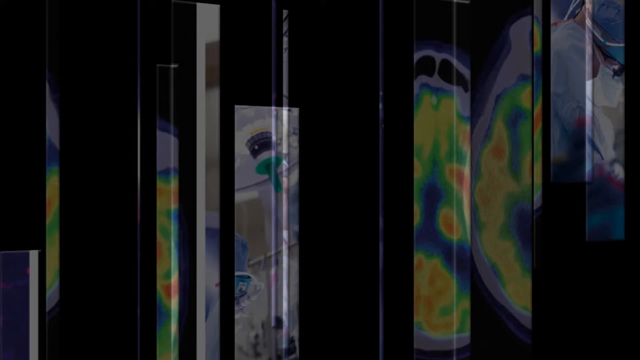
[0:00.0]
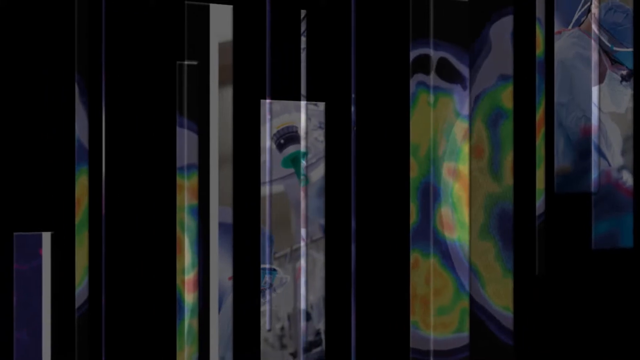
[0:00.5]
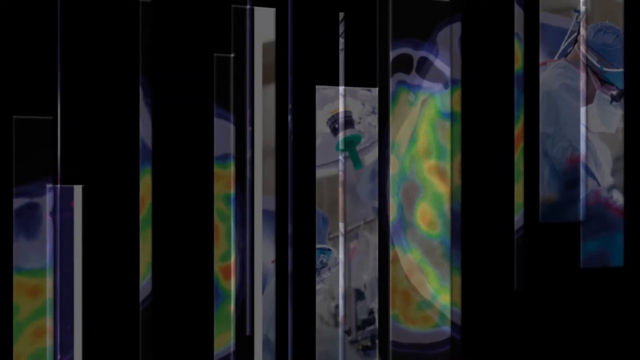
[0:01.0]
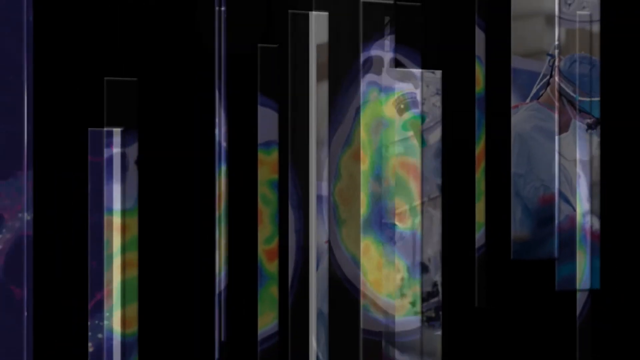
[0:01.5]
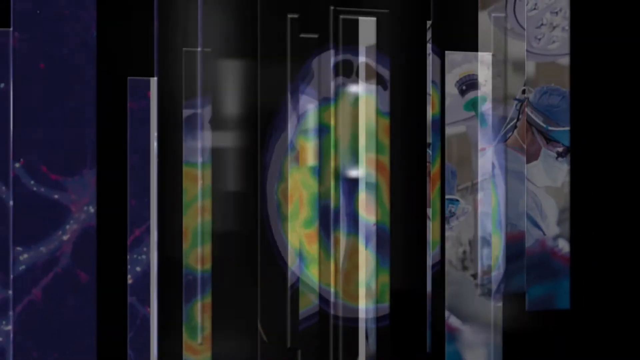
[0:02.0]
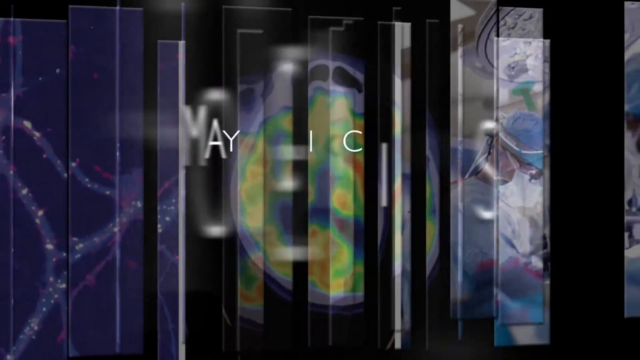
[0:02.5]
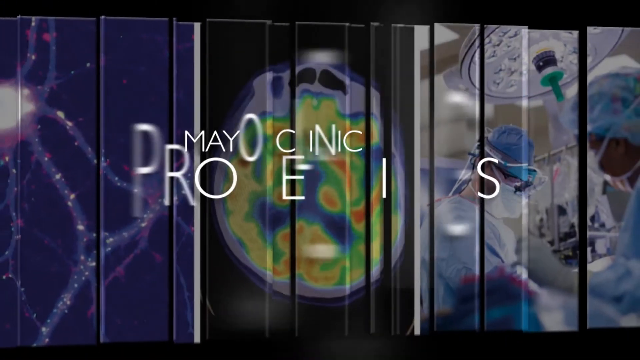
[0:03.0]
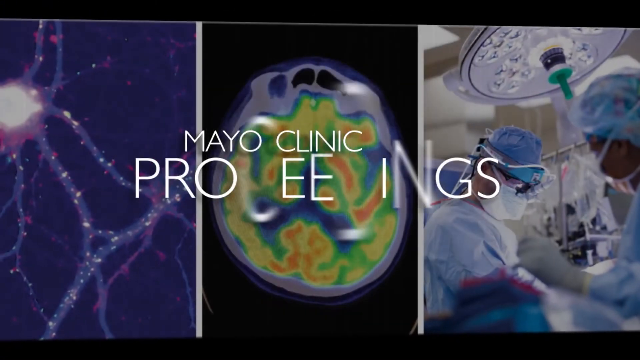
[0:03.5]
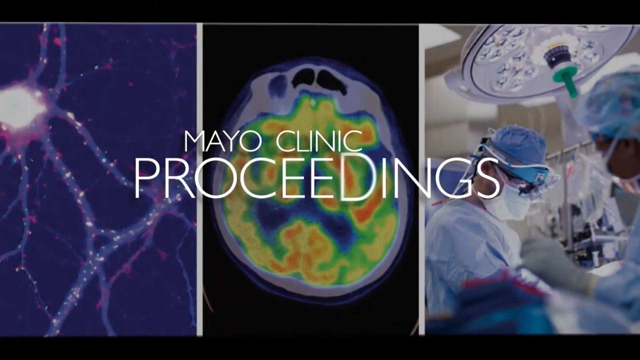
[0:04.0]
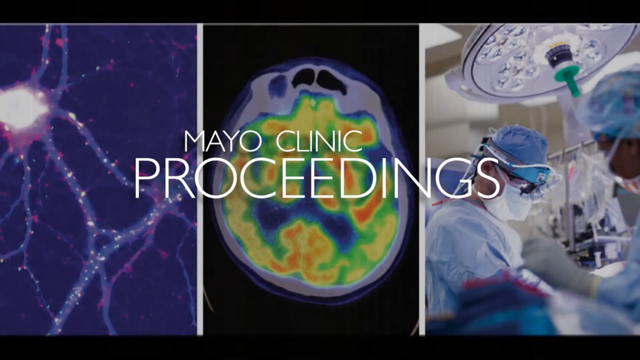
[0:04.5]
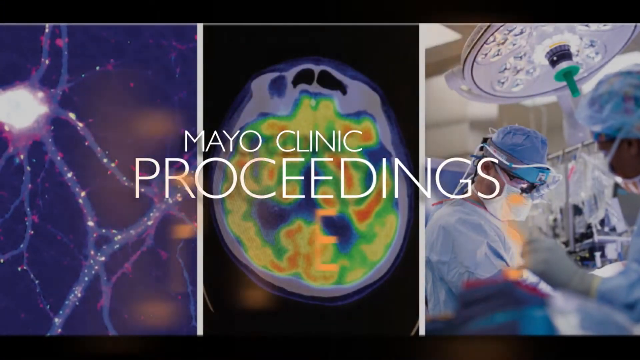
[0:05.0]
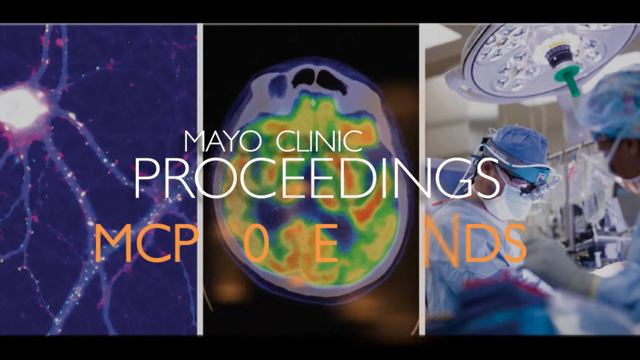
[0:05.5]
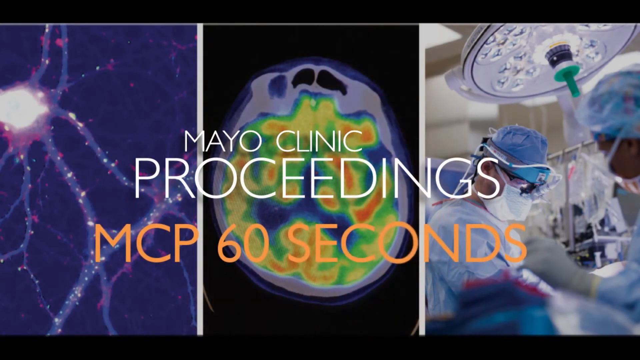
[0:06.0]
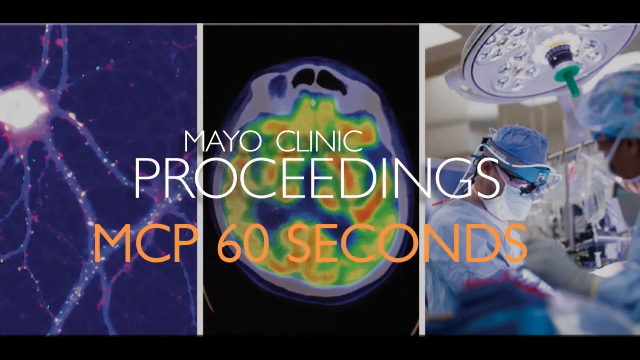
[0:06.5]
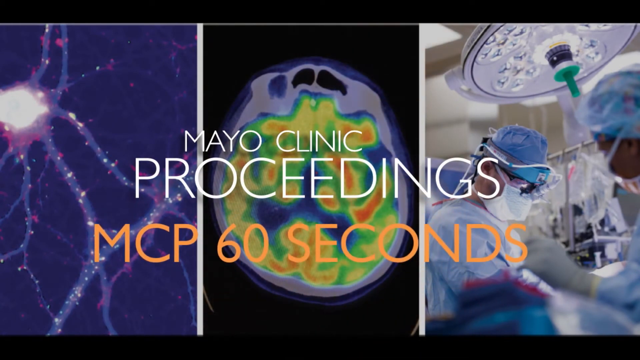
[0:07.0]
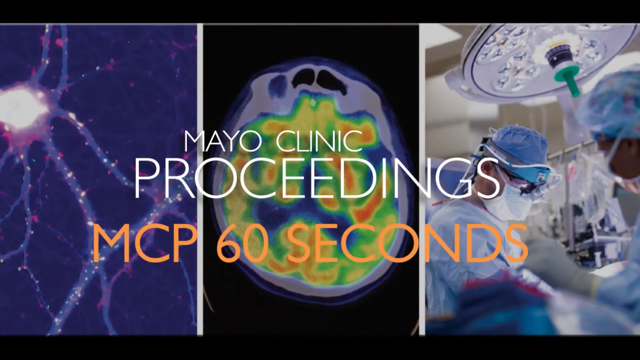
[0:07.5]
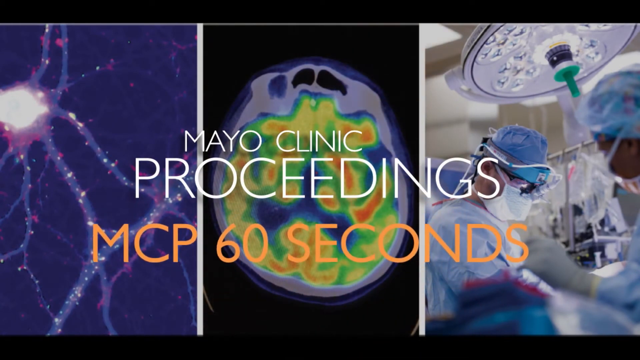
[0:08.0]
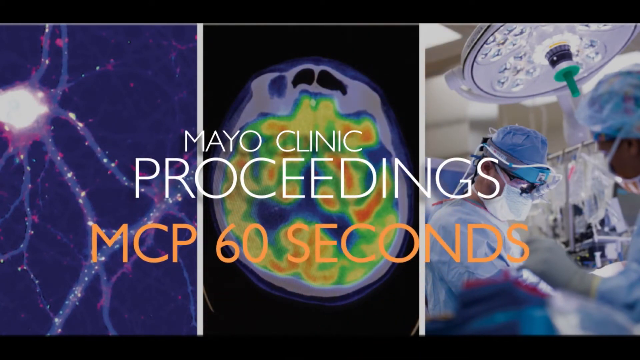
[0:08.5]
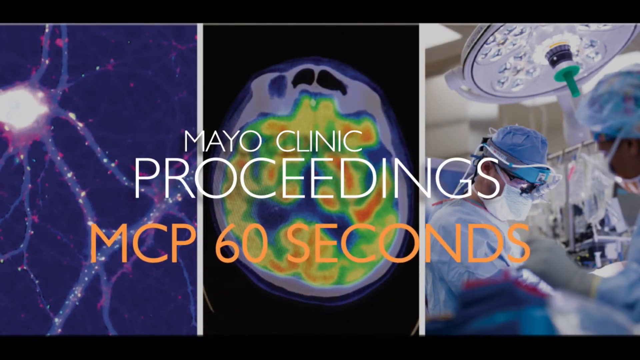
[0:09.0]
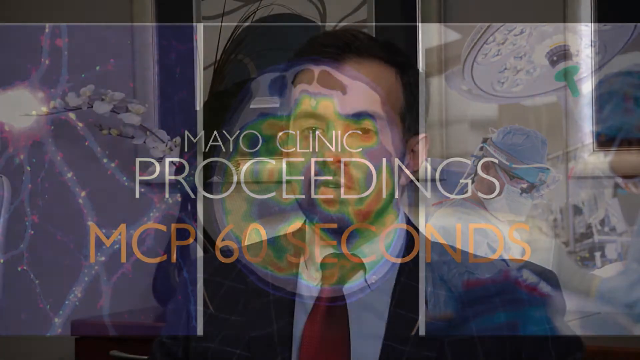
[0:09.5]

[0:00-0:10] The video opens on a black screen with slices of images on it, which are distinguishable as scans of a brain. They rotate and twist and form into basically a splash page for the video, with a picture of a neuron, a picture of a brain, and a picture of some people in a surgical situation. The title is "the Mayo Clinic Proceedings", with a subtitle of "MCP 60 Seconds". The view then moves to a man in a suit speaking to camera in a browny gray room. His suit has a lot of checks. He is white or Hispanic, and his beard is beginning to turn white.